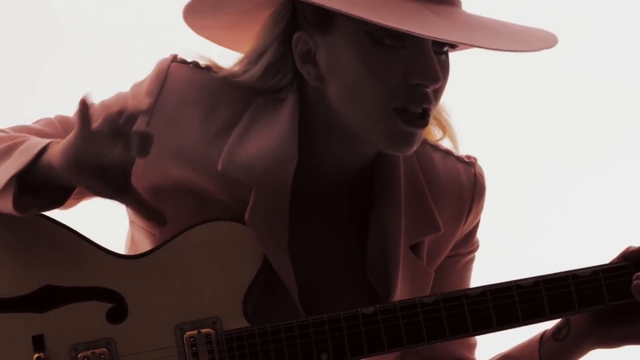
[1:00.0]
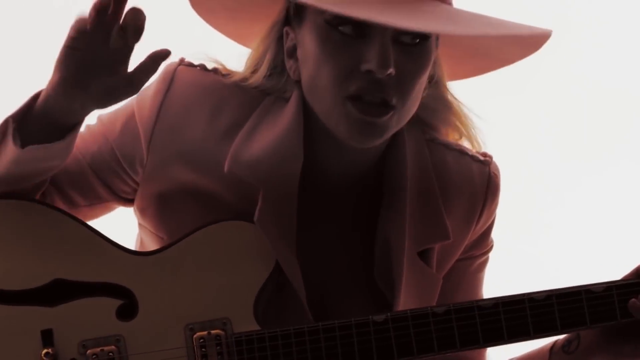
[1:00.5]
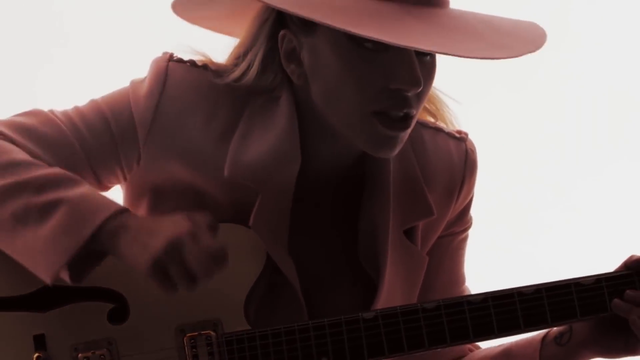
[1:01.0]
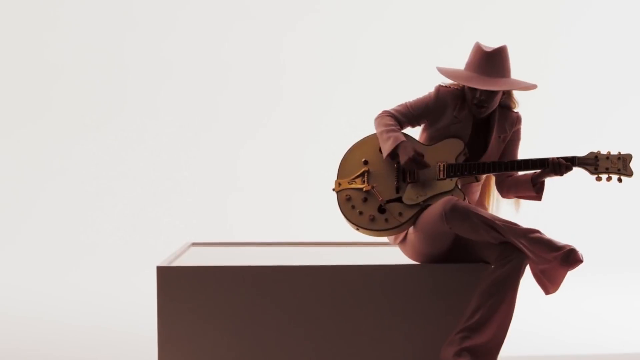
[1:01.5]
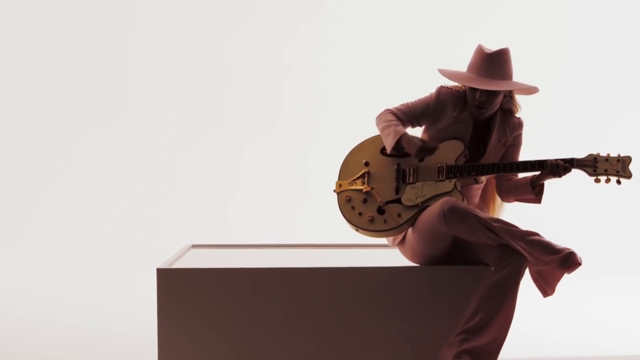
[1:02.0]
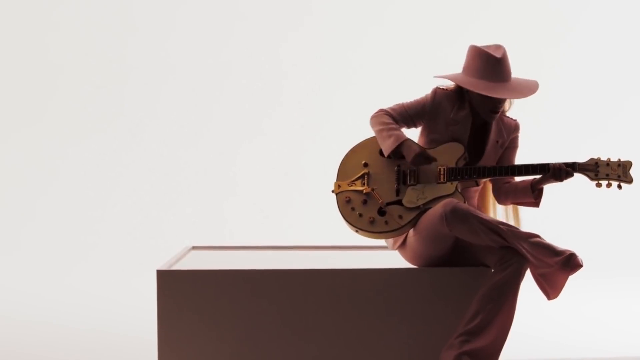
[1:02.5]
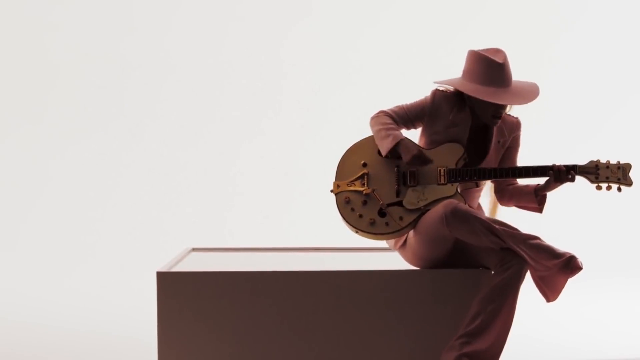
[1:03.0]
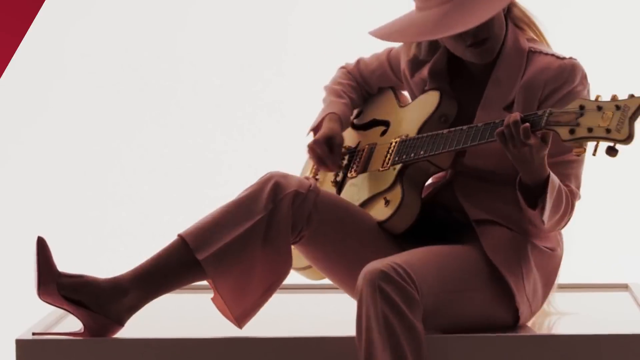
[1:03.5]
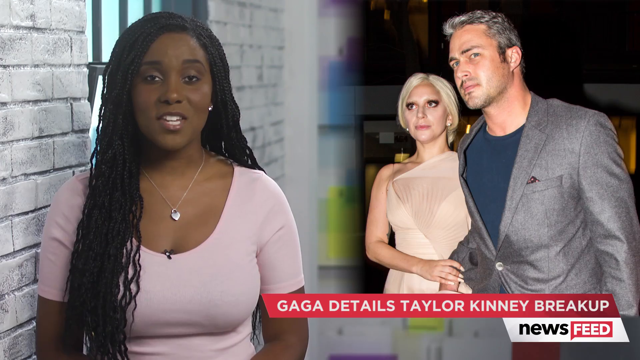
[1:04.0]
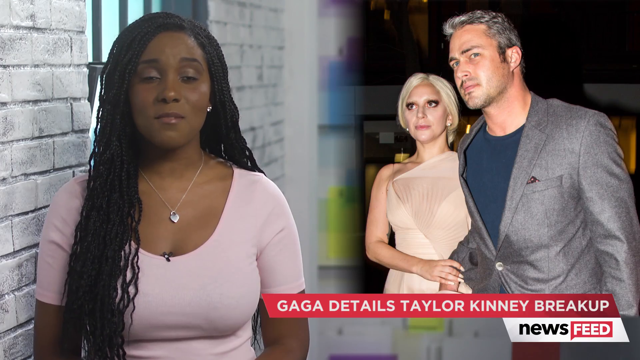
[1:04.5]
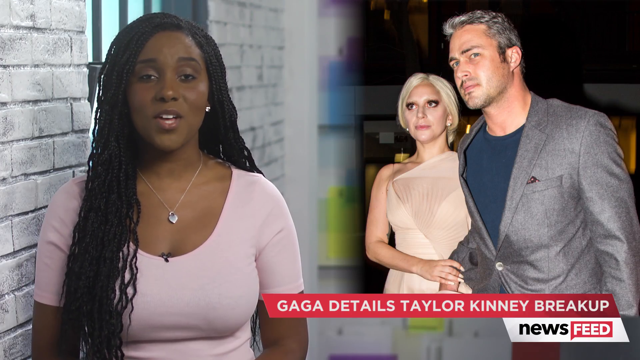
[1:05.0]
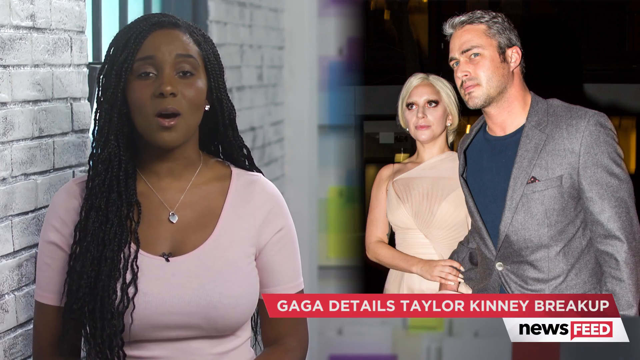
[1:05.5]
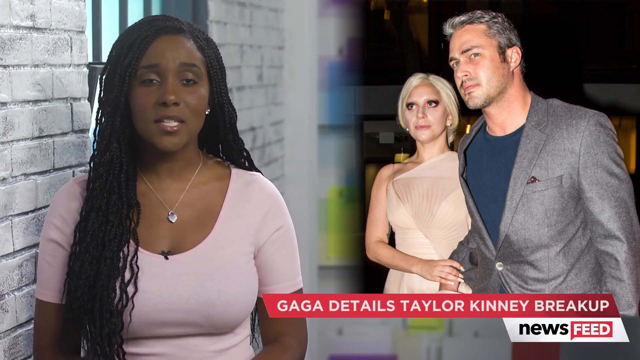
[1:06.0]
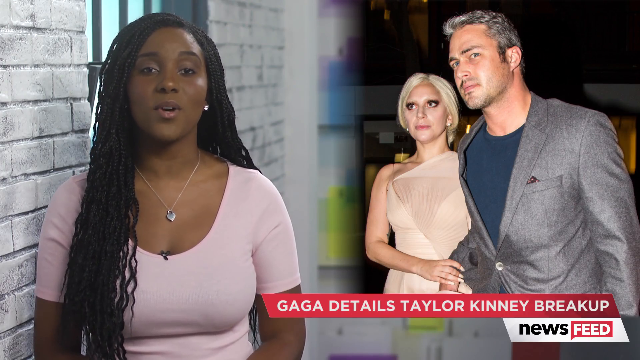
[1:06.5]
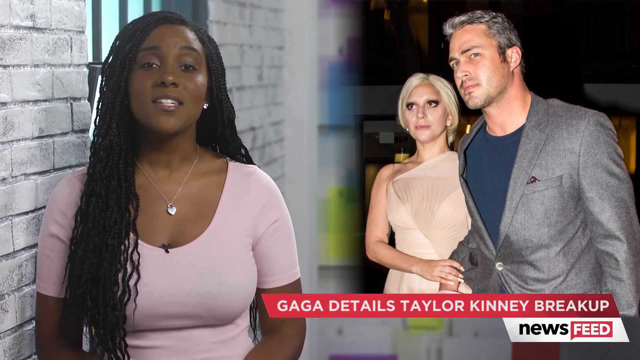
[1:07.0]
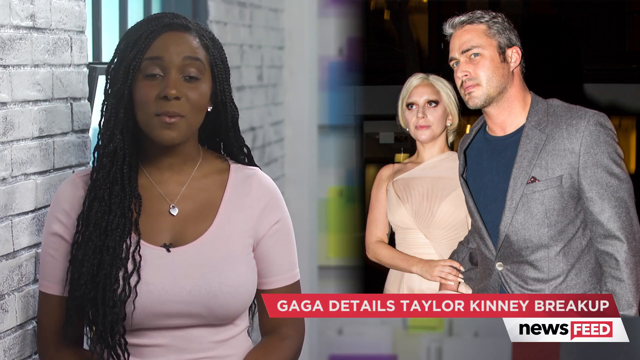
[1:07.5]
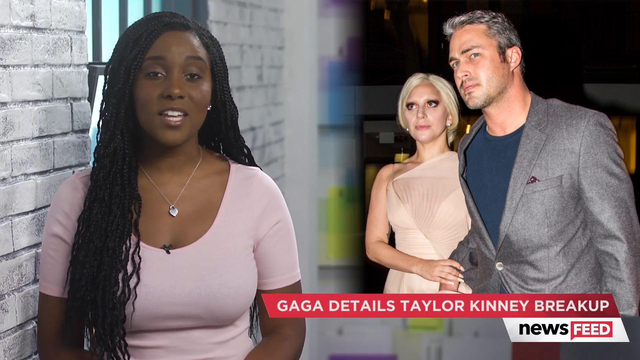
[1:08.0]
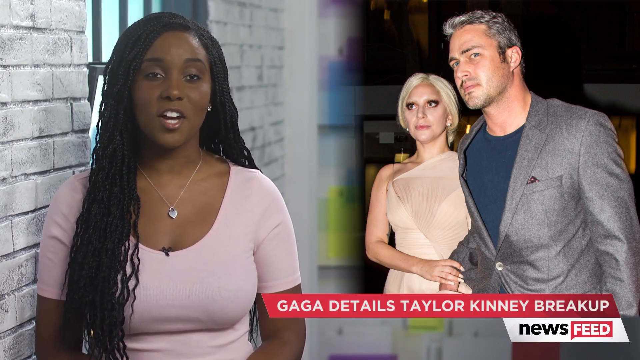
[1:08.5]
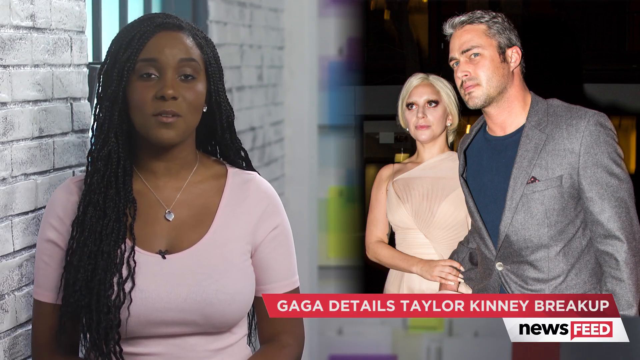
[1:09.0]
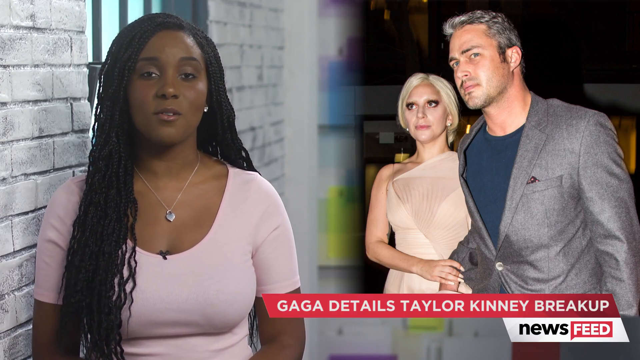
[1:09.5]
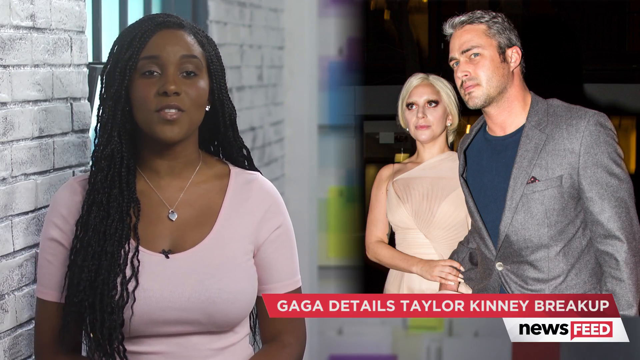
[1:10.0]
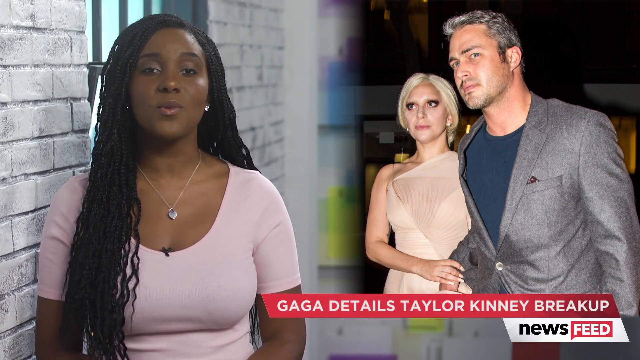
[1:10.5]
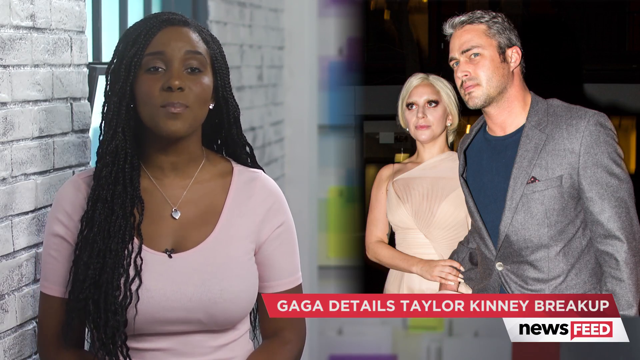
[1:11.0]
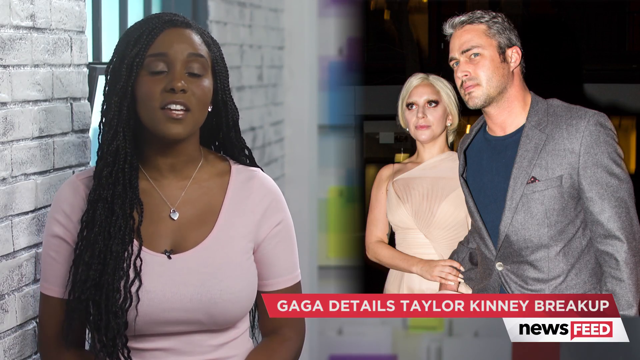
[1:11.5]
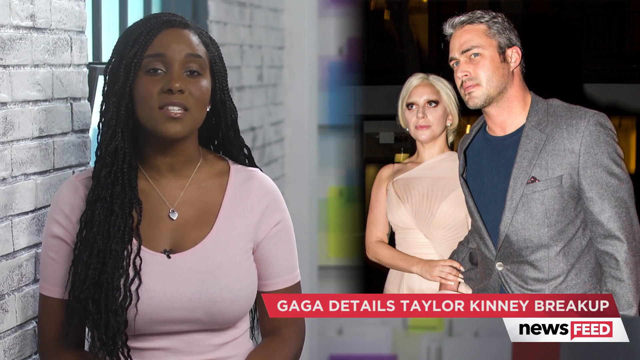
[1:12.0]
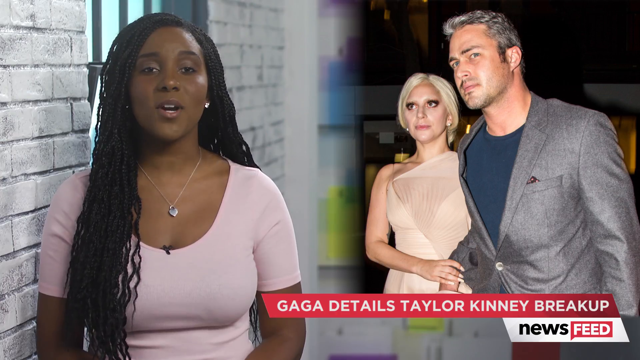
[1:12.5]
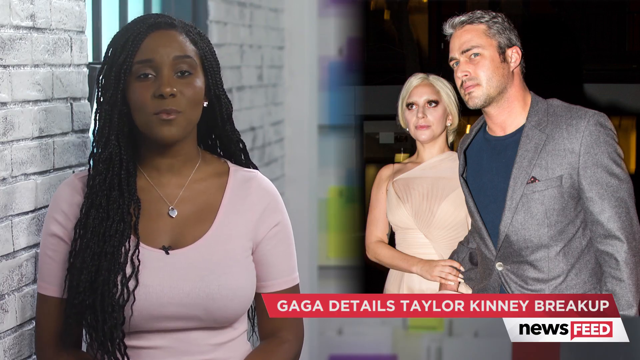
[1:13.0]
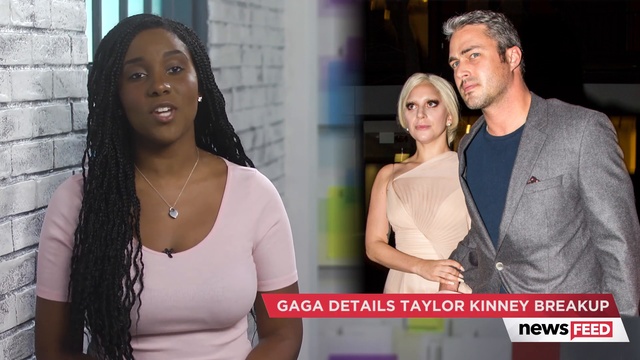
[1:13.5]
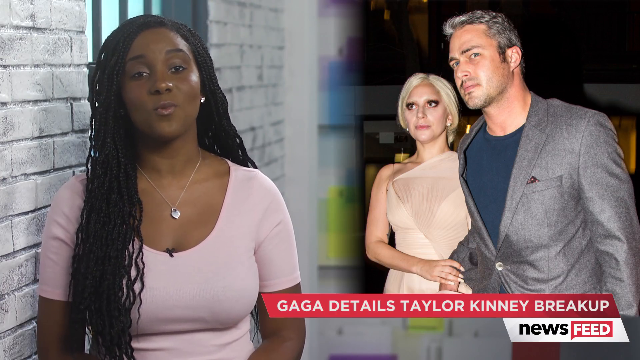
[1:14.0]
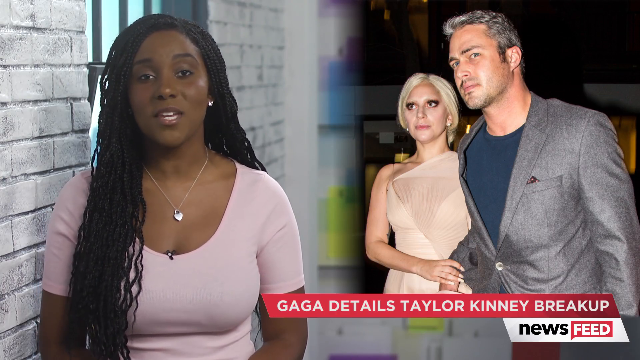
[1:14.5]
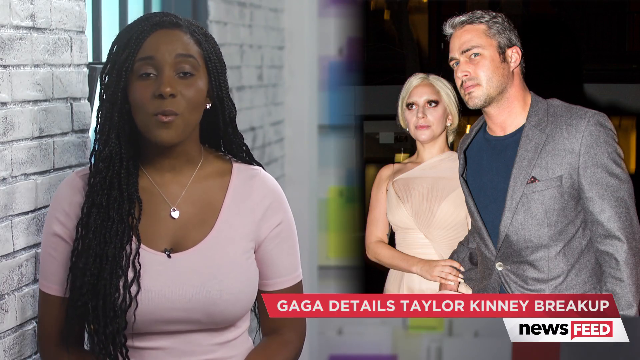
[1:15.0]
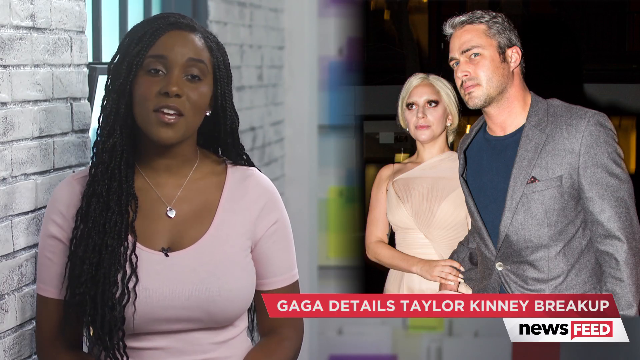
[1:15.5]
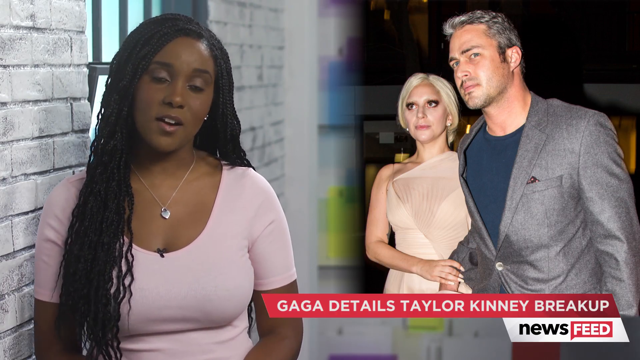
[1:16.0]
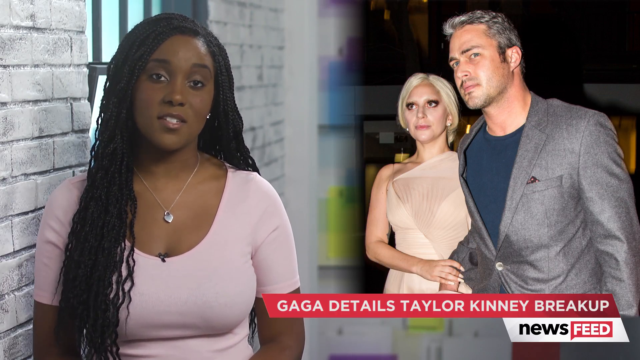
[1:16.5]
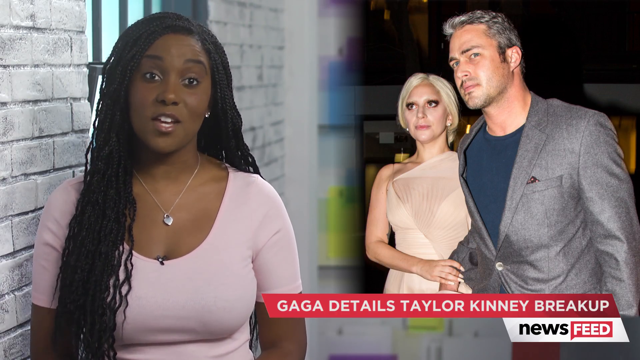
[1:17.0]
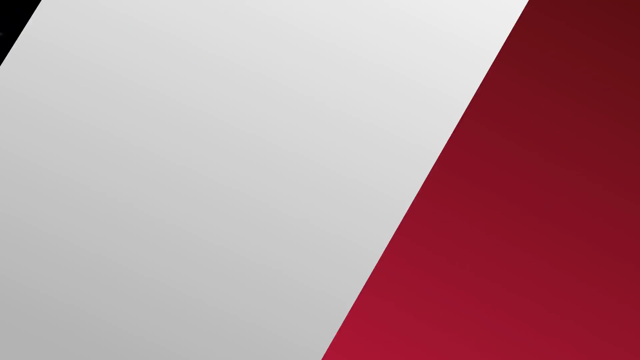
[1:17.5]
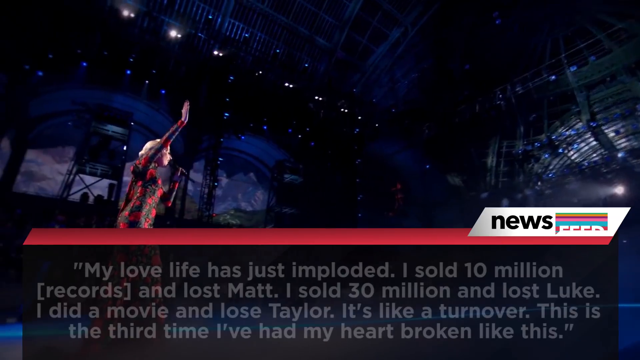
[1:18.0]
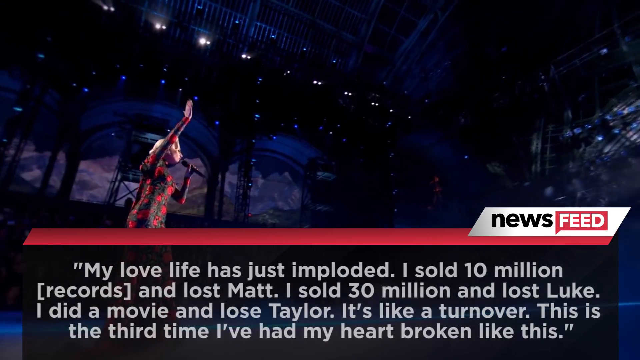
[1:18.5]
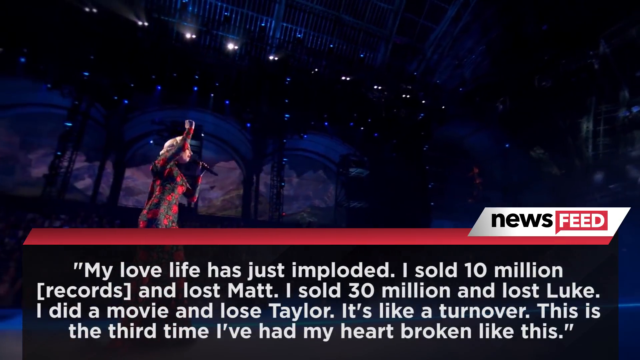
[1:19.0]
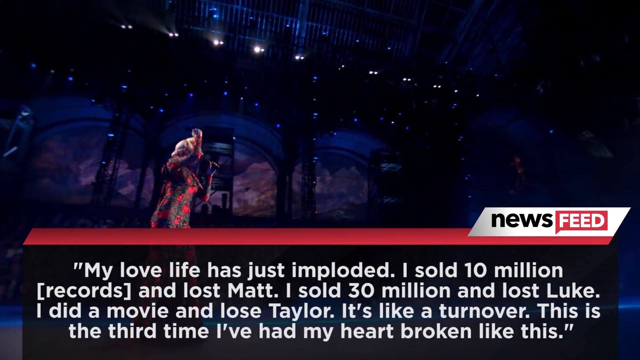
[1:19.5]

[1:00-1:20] Lady Gaga appears wearing a pink blazer and a big pink sombrero, holding a white guitar; she appears to be singing. The camera cuts back to show her sitting on a very simple, rectangular bench, bobbing up and down as she strums the guitar, her outfit completely pink. The screen then returns to the hostess, an African-American woman in a pink top with very long braided hair and a necklace, speaking directly to the camera as she stands next to a wall of white bricks. To her right, another image of Lady Gaga with her boyfriend appears. The screen then changes to show Lady Gaga on stage.